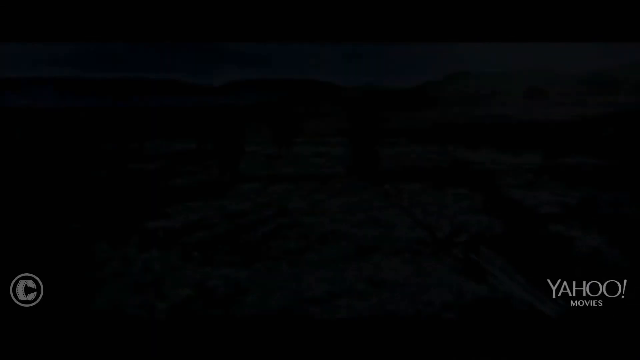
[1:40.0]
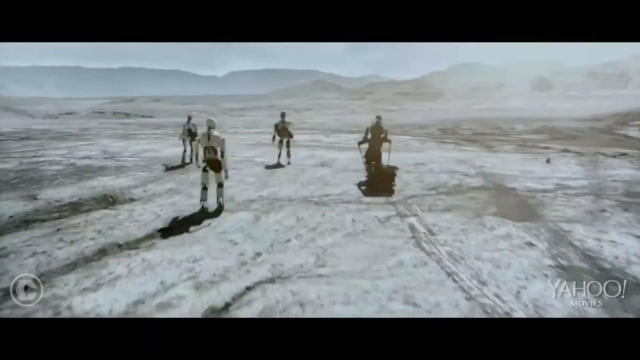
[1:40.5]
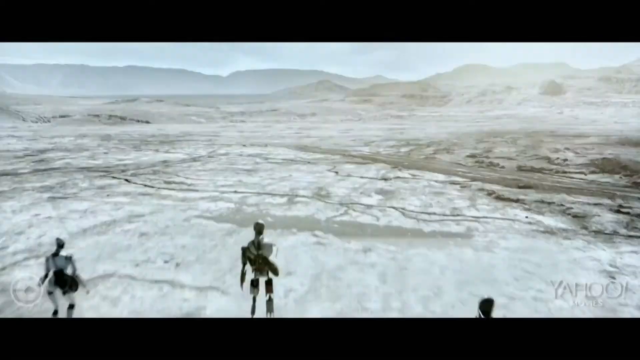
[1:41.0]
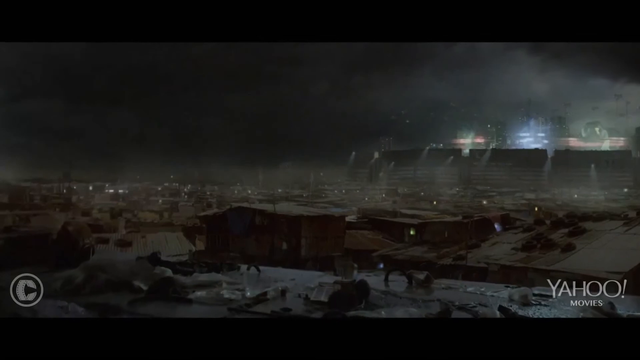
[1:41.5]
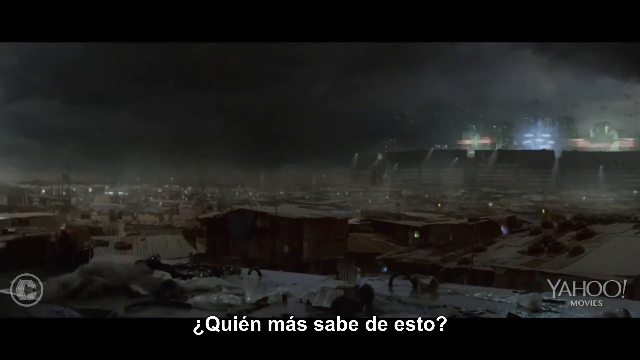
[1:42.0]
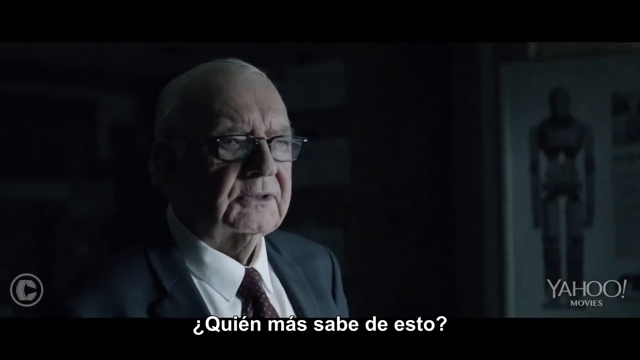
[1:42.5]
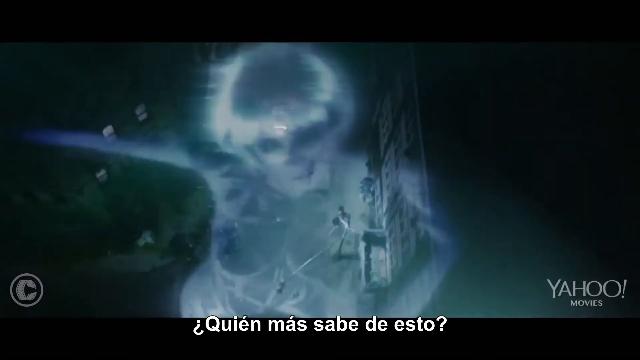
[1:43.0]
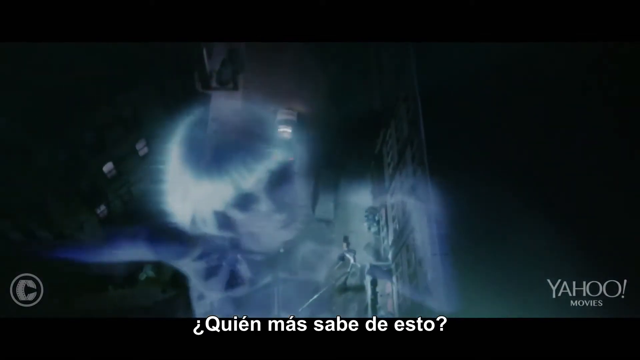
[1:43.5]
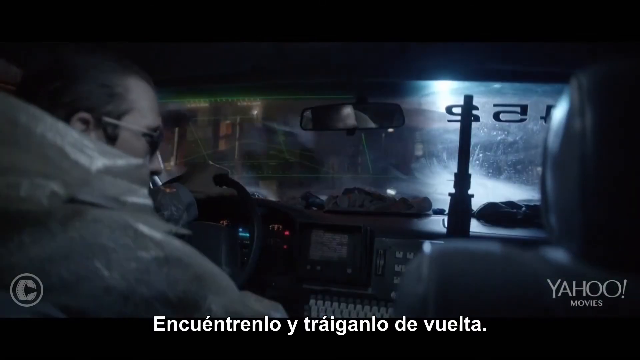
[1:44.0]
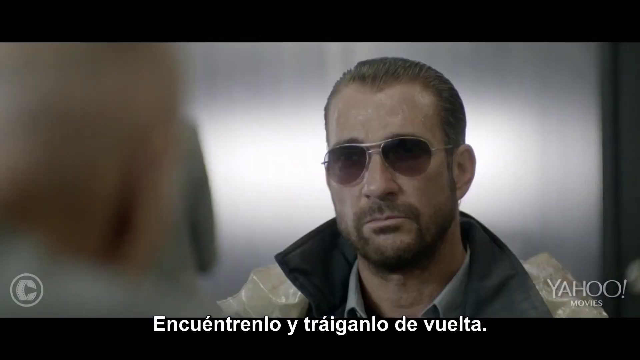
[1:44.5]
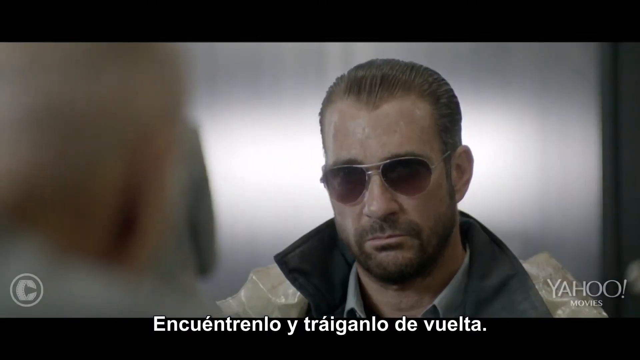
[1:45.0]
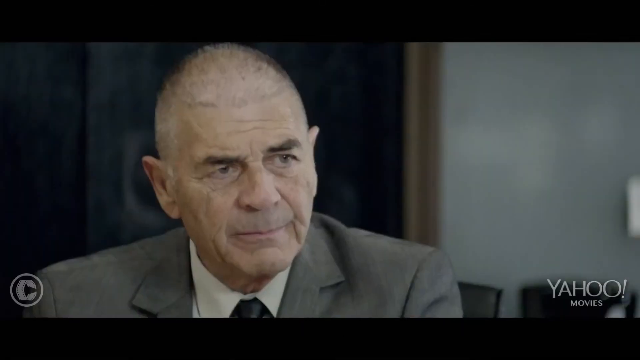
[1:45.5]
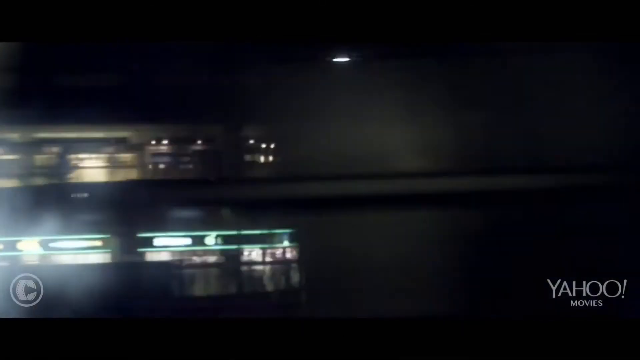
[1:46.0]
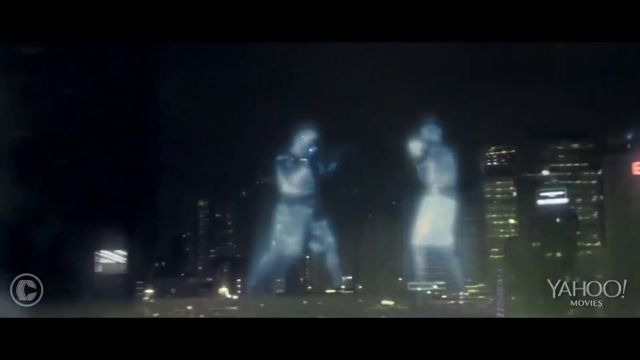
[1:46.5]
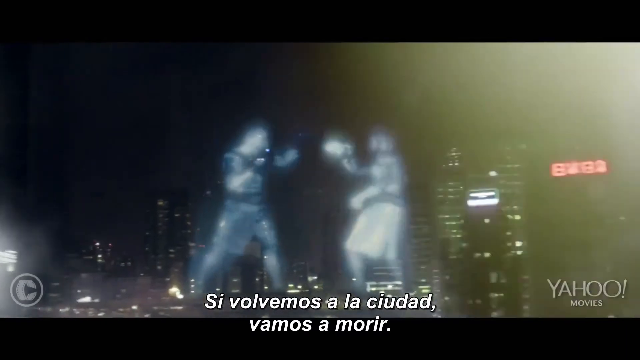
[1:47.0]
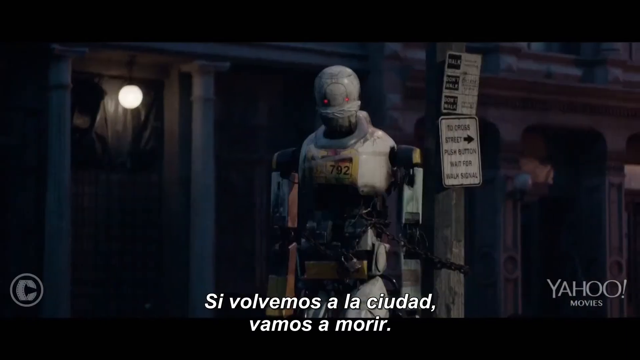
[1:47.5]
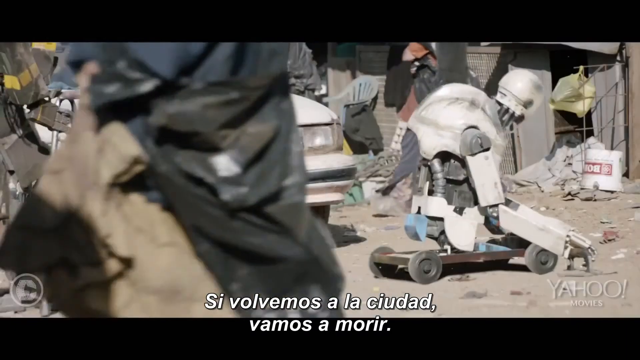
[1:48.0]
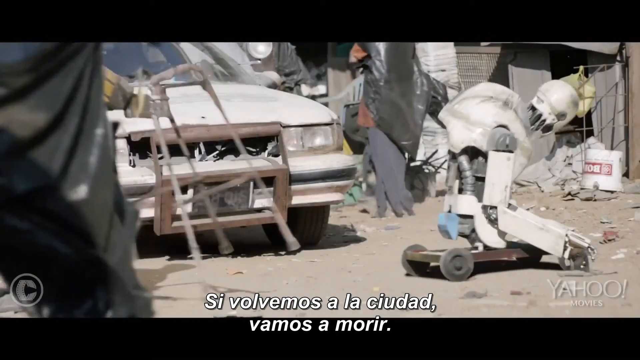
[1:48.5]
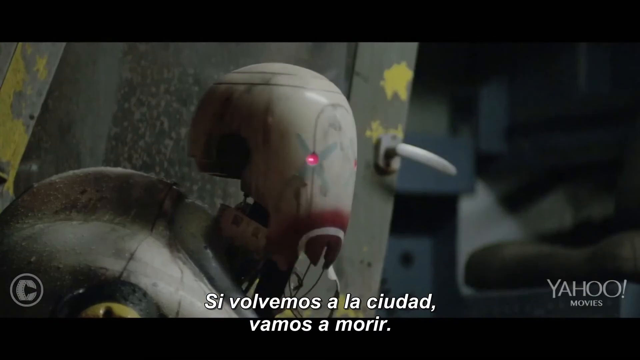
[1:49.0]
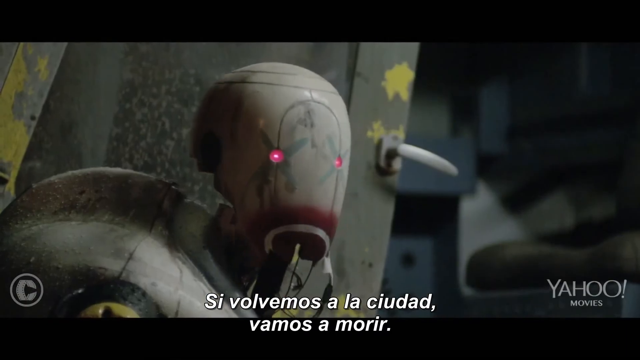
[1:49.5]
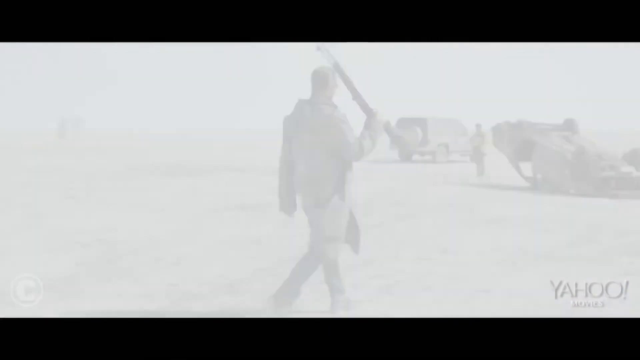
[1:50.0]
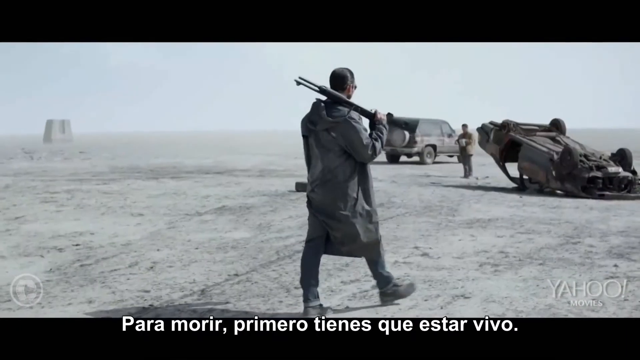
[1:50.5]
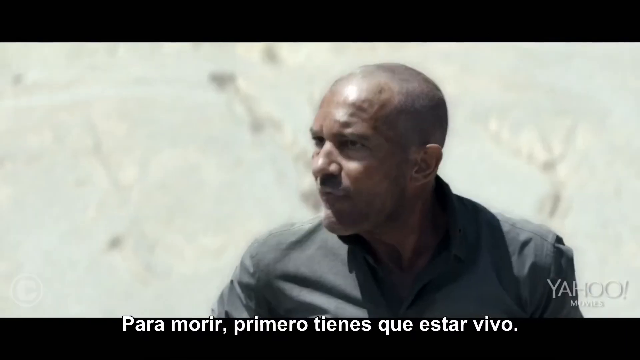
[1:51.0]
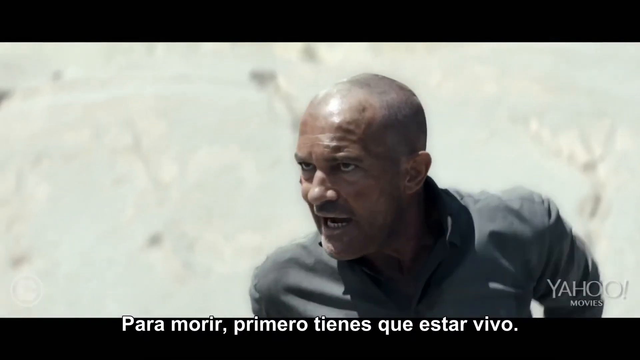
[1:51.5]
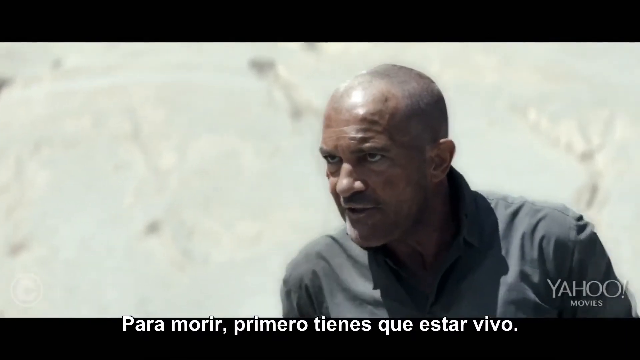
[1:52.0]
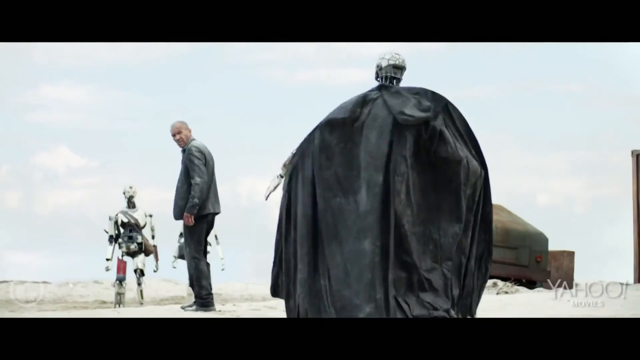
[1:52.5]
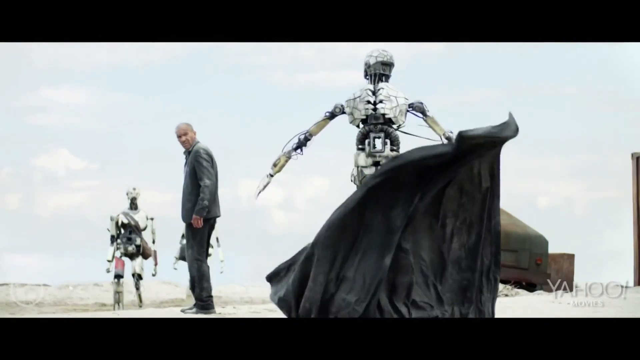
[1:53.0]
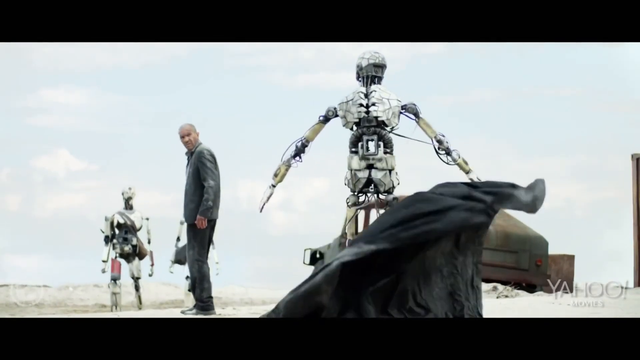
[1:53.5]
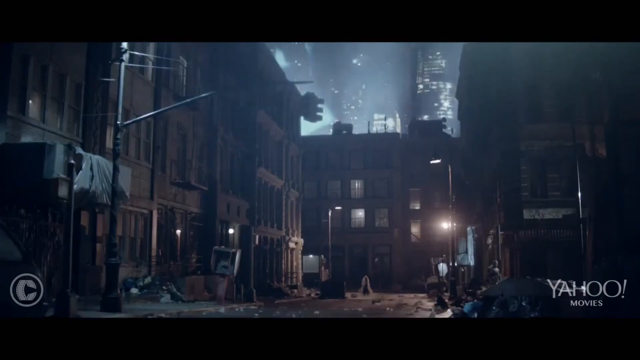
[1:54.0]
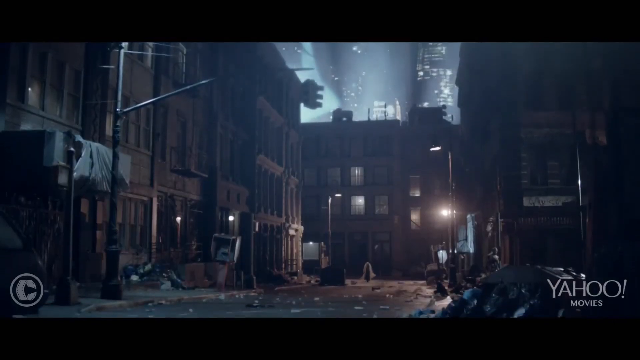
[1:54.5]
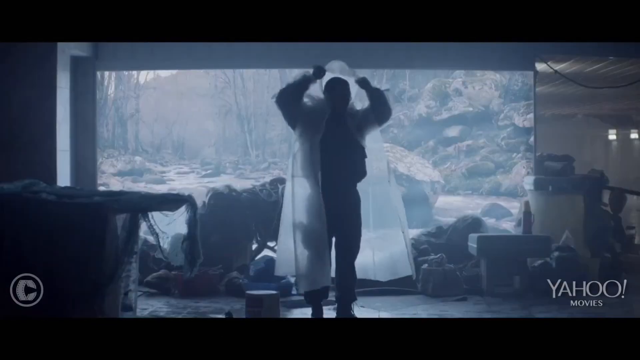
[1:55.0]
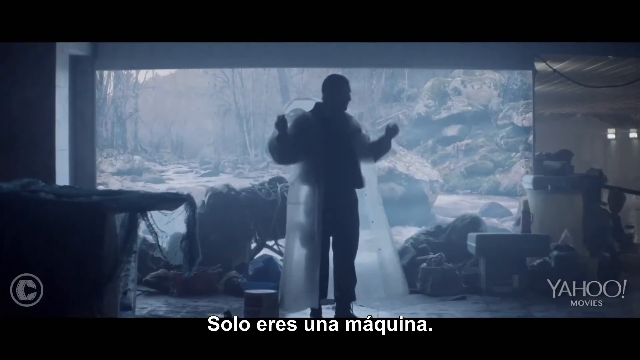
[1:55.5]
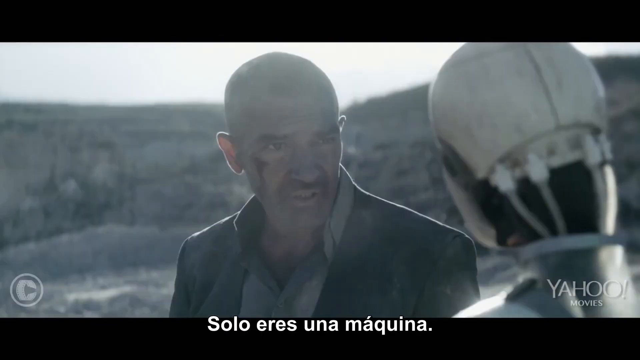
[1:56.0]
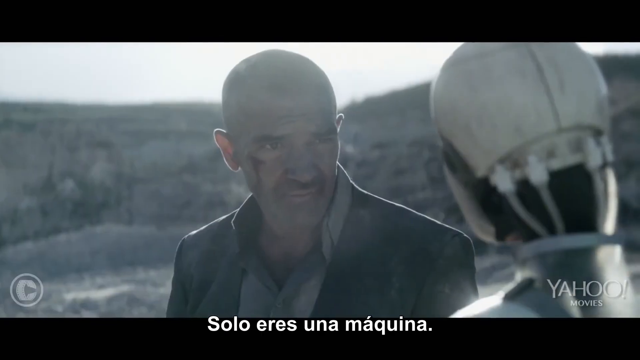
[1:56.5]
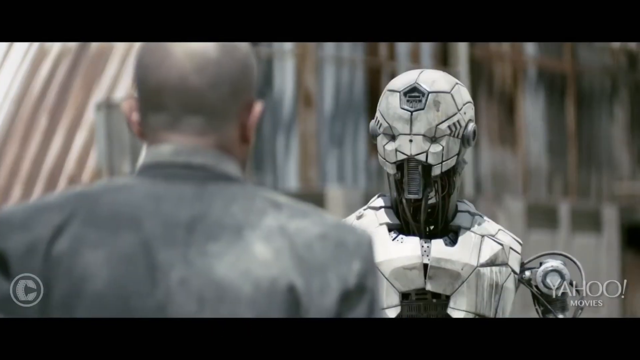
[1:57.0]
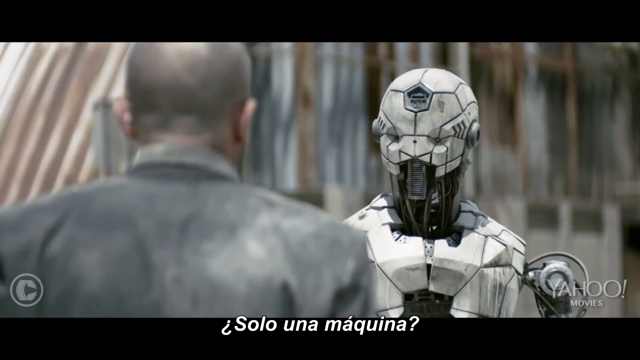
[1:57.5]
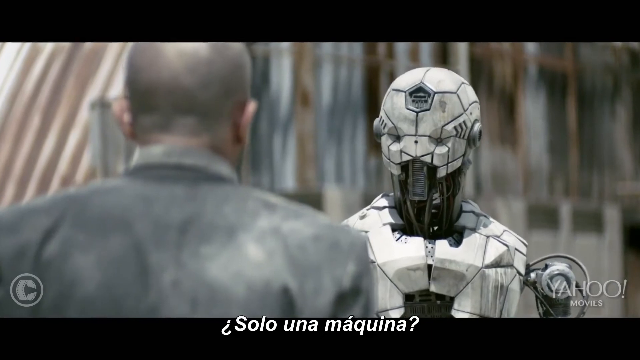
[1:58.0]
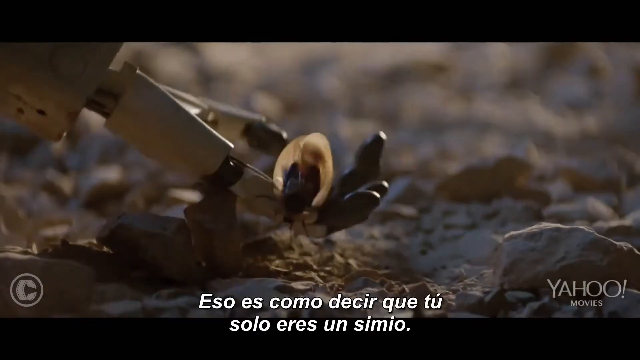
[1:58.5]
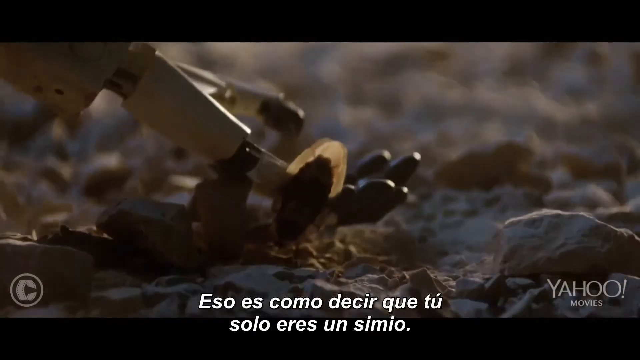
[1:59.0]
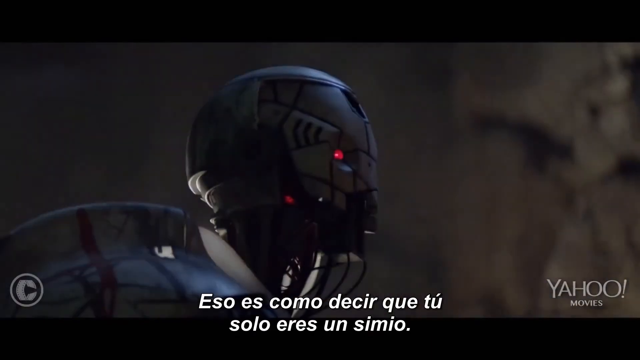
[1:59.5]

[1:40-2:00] Four robots in the desert hold the man who was being dragged. The view pans out to a different shot of the city, almost like a stadium but actually a big factory, with many little warehouses and houses on the outskirts, seemingly portraying what the new age looks like. An older gentleman asks who else knows of this. A hologram of a robot appears. One of the antagonists who shot a robot drives around wearing shades, talking to someone else. Holograms show clips of different robots struggling and not functioning well; one has had half of its body chopped off and uses its arms to get around on a little platform with wheels. In a short action scene, a car is flipped over and a man holds a shotgun. A robot takes off a cloak, exposing its inner workings, and a machine appears that looks a little more sinister than the others.